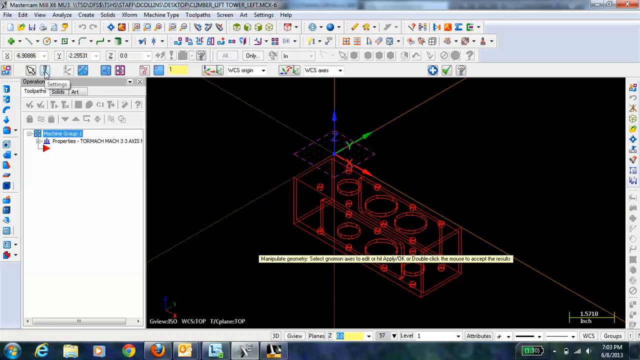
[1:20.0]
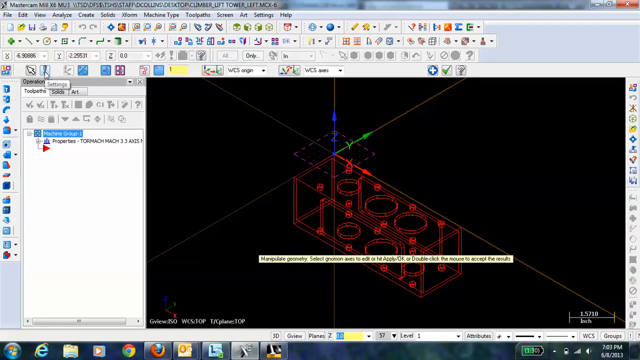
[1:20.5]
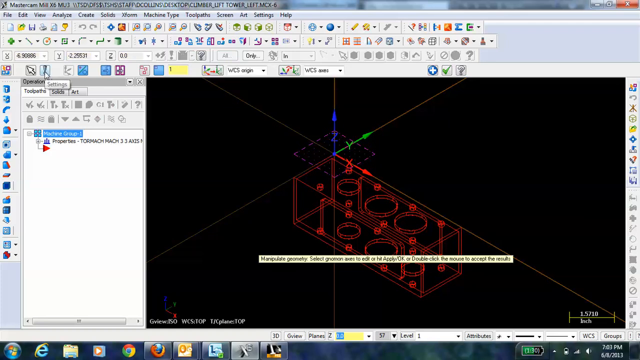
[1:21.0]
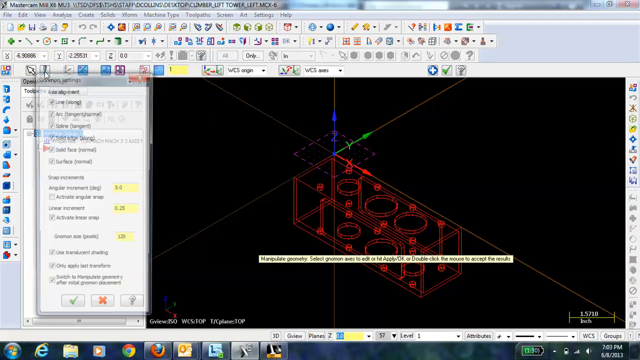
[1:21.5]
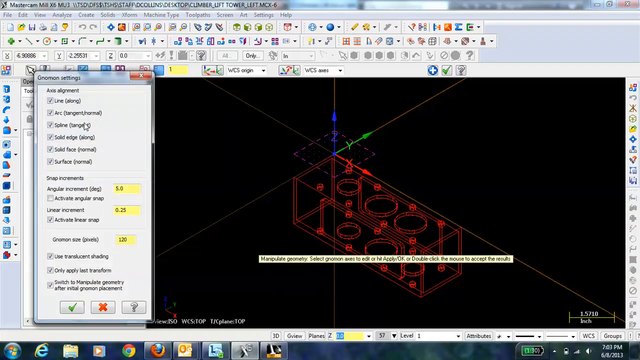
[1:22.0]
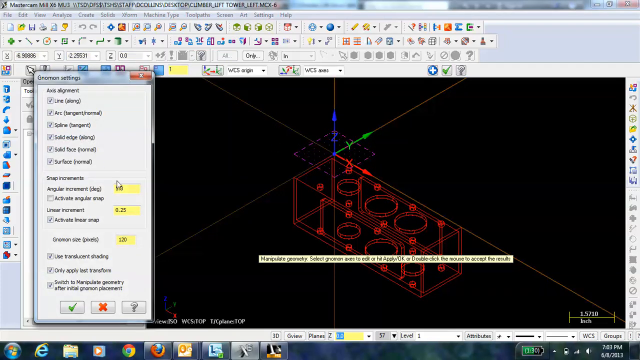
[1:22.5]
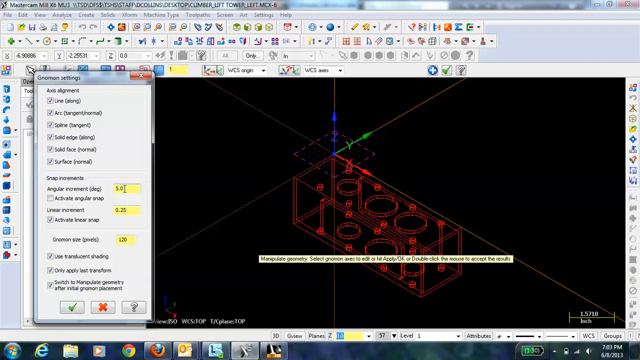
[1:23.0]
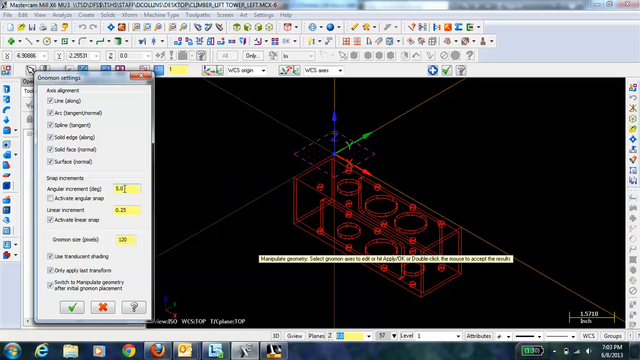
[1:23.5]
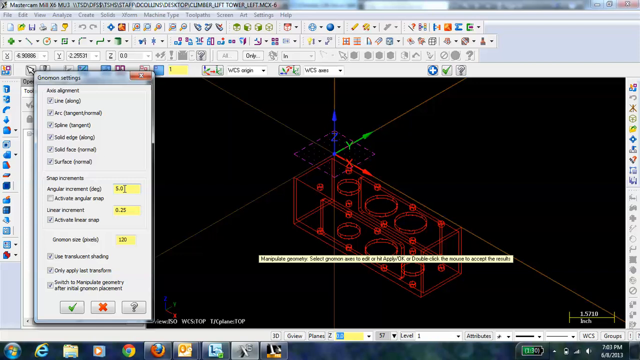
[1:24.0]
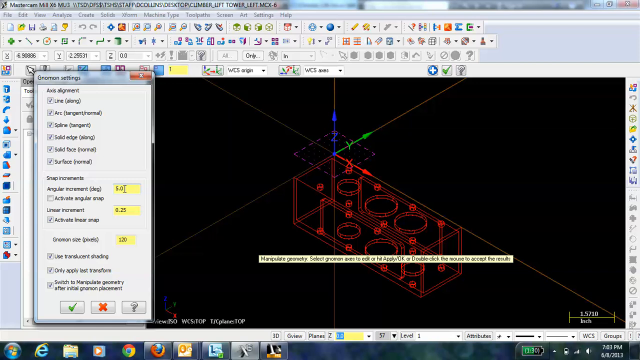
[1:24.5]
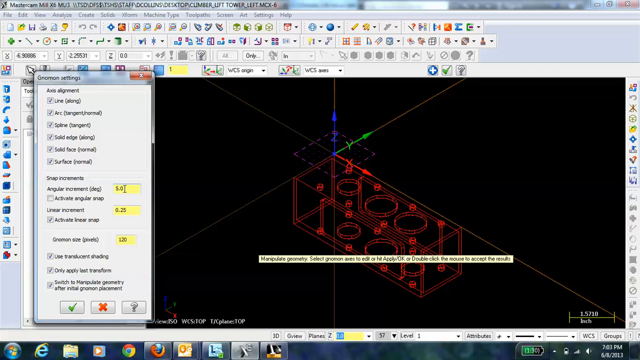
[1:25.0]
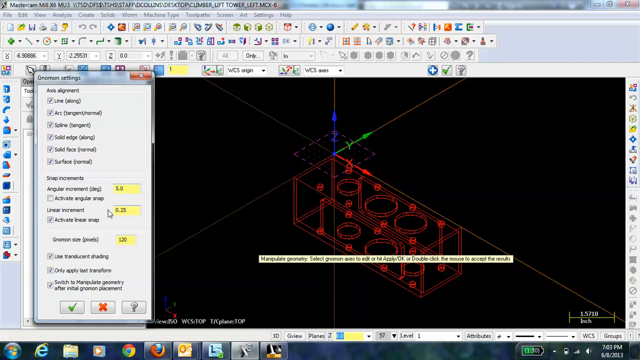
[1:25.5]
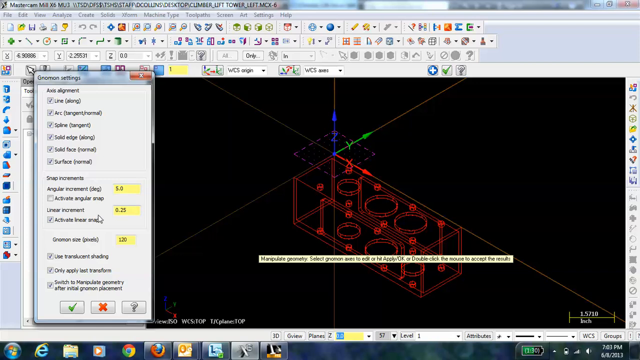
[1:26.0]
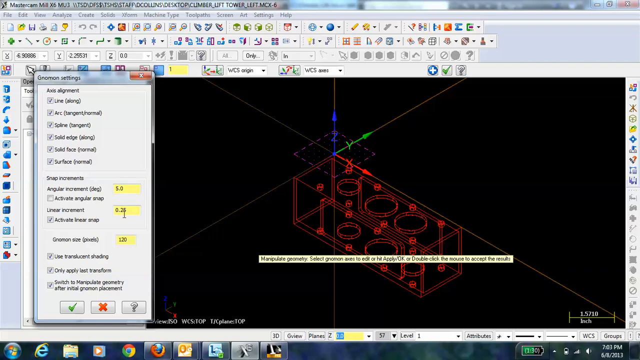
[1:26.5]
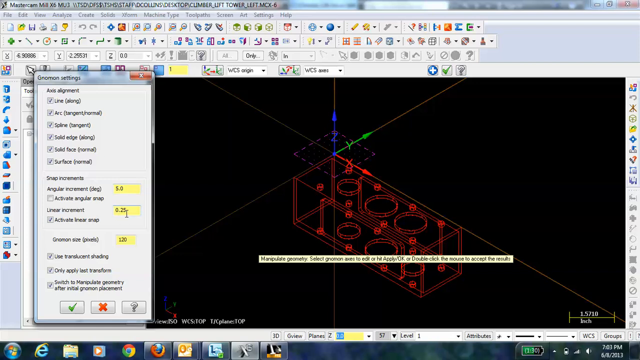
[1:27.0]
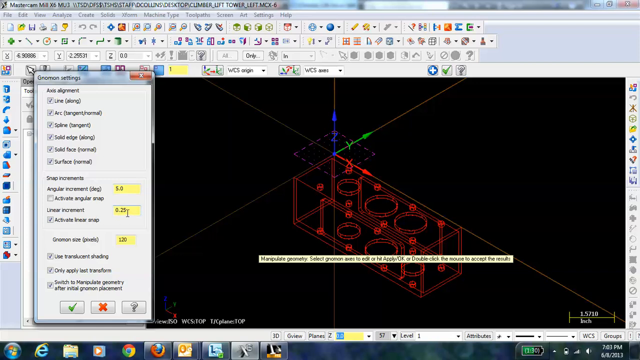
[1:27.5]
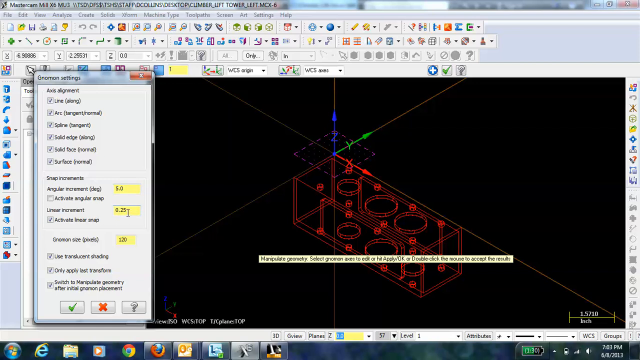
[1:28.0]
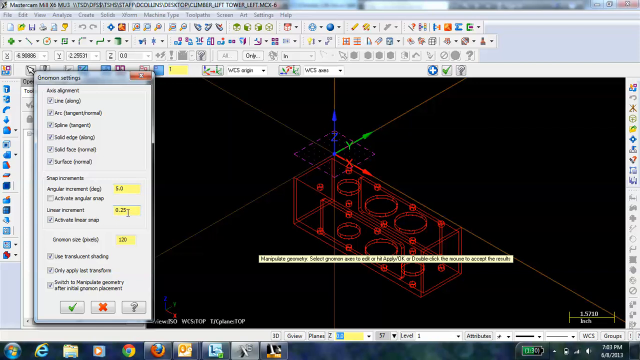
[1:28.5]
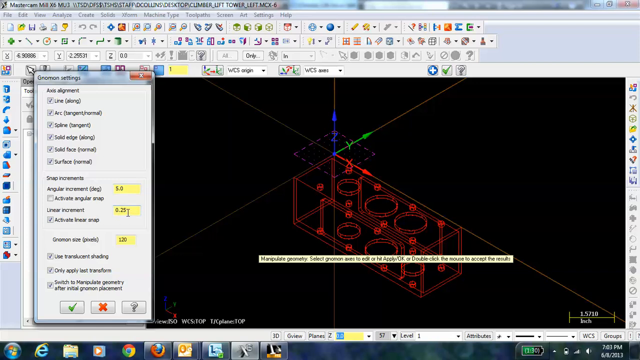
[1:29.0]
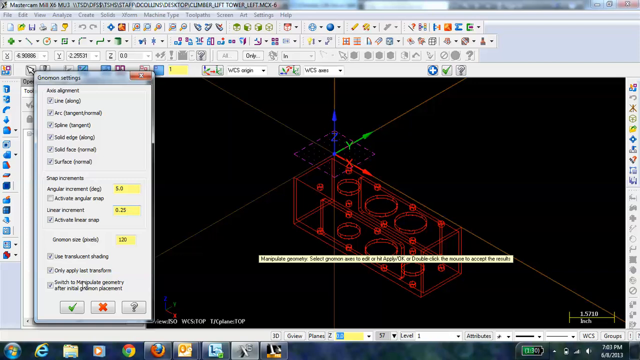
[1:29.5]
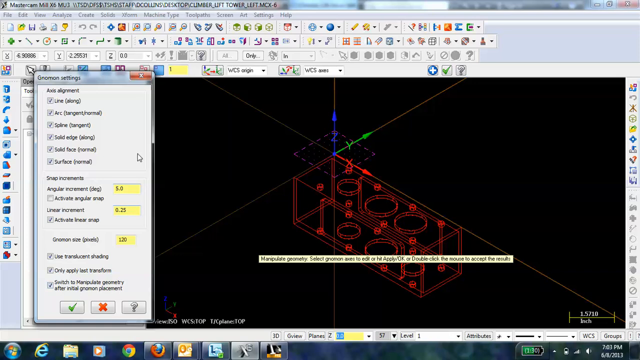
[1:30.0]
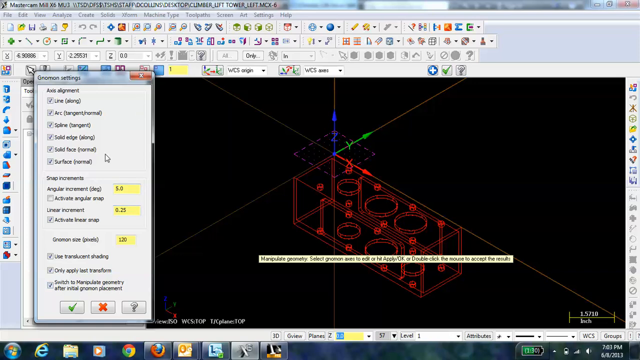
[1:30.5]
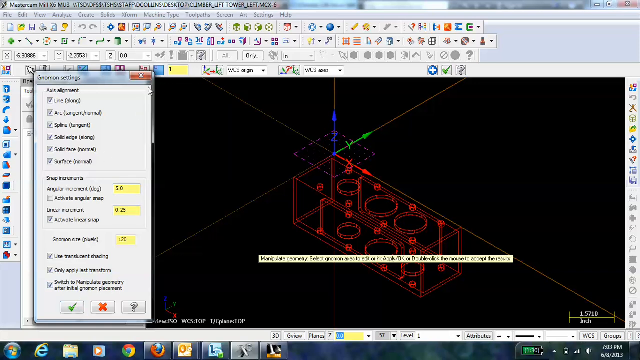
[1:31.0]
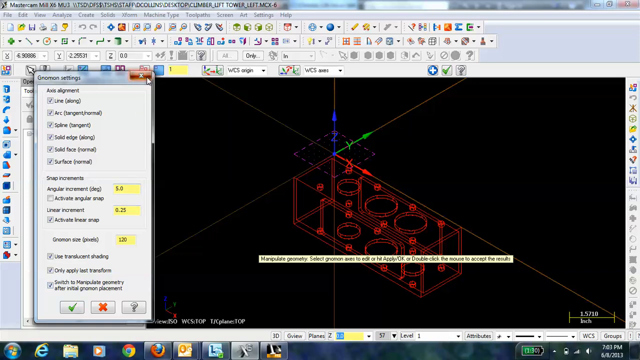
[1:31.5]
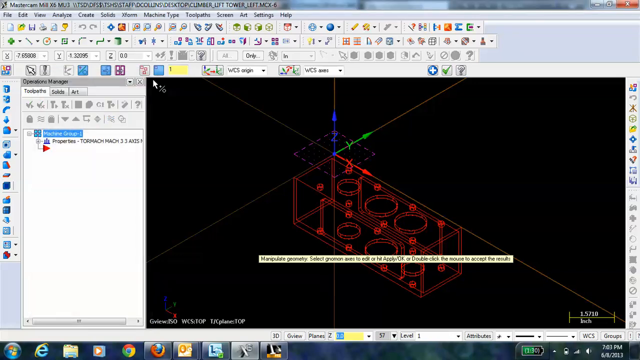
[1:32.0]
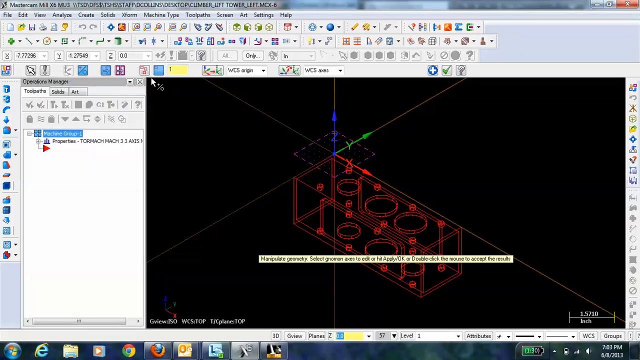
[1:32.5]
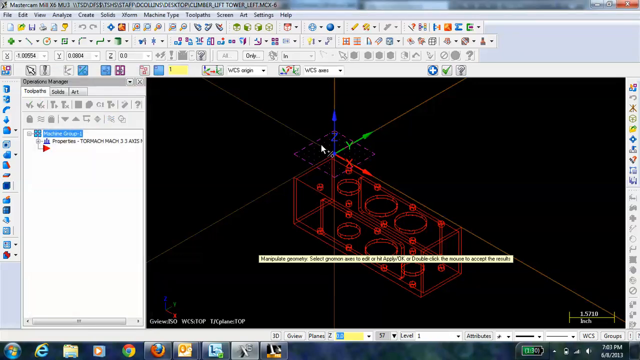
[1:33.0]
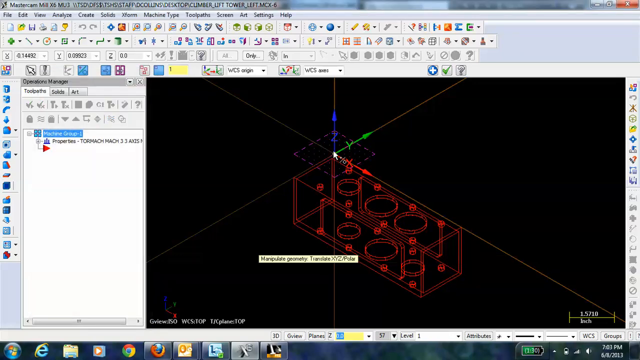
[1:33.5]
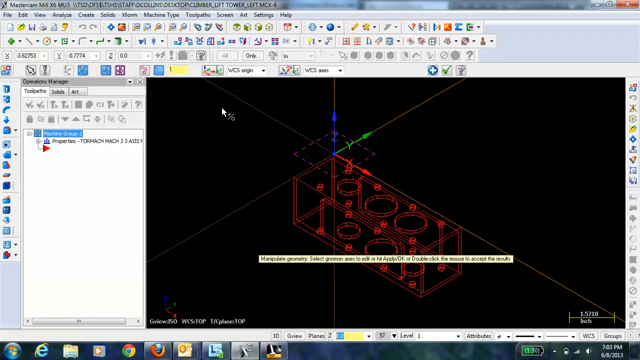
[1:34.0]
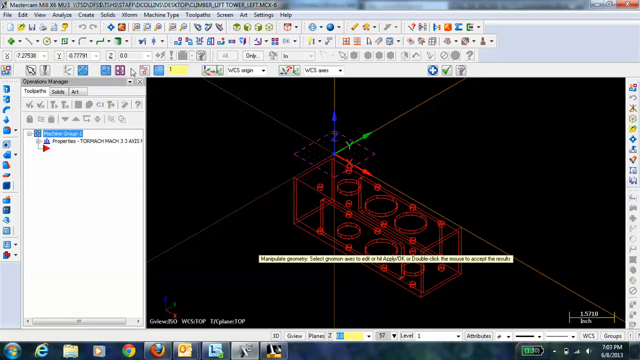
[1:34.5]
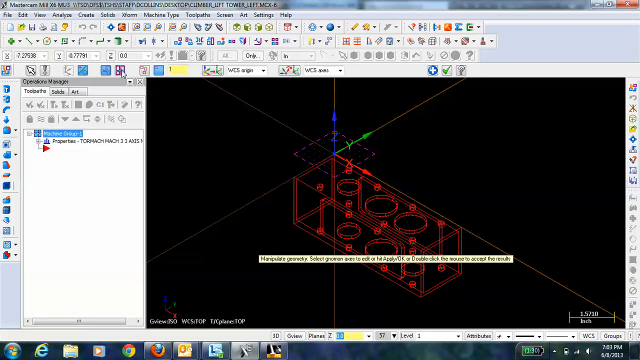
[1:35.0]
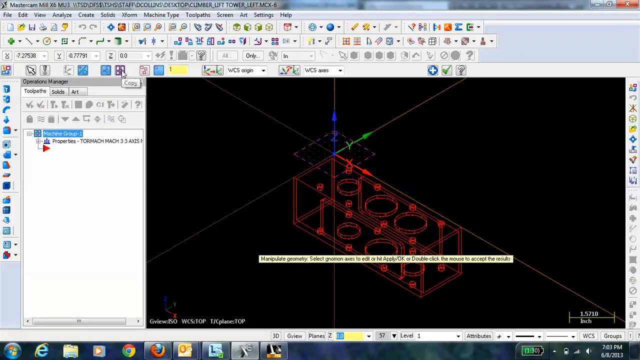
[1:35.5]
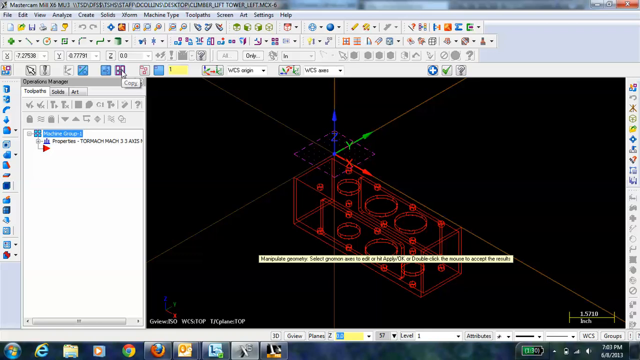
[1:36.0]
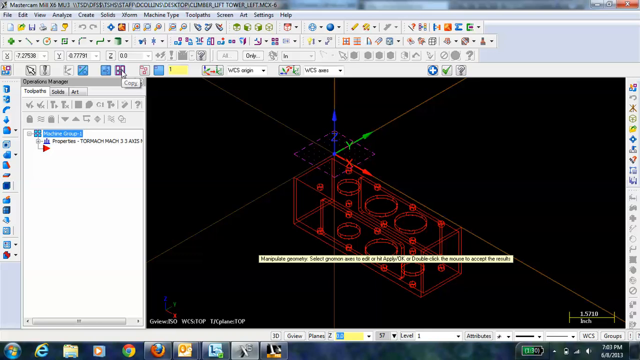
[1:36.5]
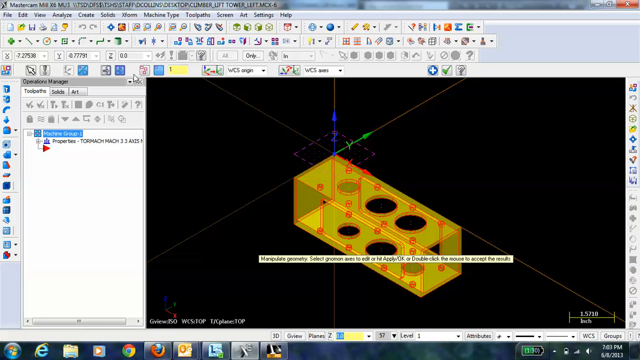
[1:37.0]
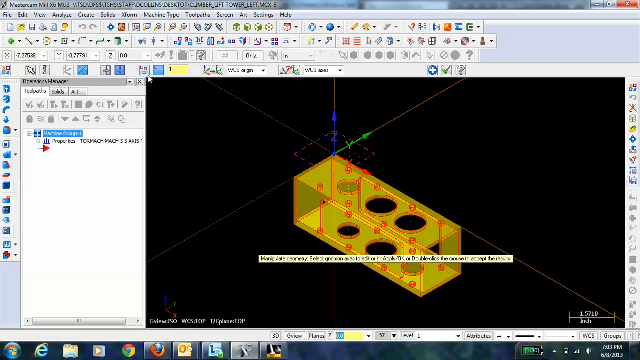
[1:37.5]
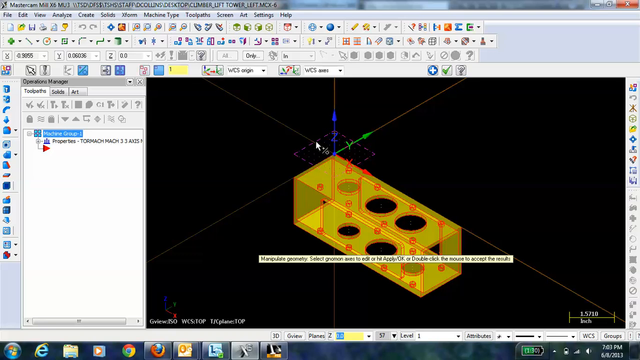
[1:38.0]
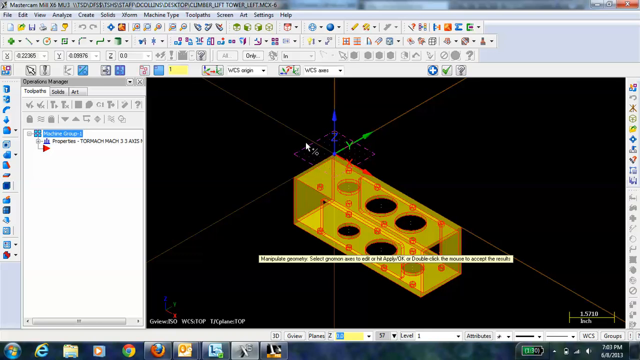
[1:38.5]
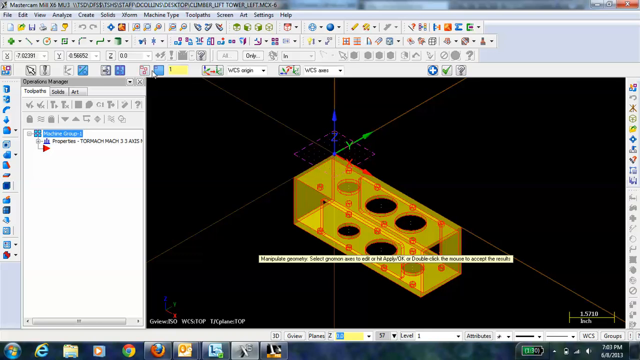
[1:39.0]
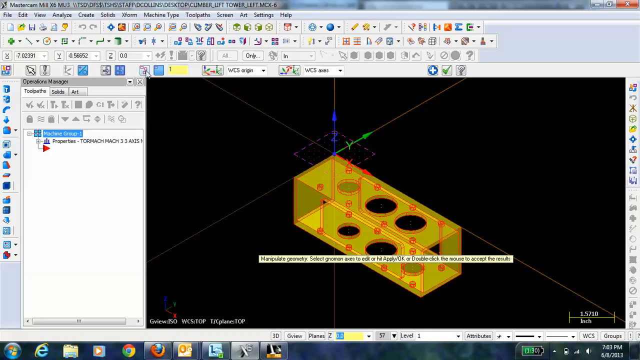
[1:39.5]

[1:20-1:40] The rectangular box is red again, like a wireframe red color, with its corner at the anchor point in the middle of the x, y, and z axes. He opens a menu called gnomon settings, which has check boxes for axis alignment: "line (along)," "arc (tangent/normal)," "spline (tangent)," "solid edge (along)," "solid face (normal)," and "surface (normal)." Underneath is "Snap Increments," with angular increments and linear increments, then another for gnomon size, and more check boxes that say "use translucent shading," "only apply last transform," and "switch to manipulate geometry after initial gnomon placement." There are a check, an X, and a question mark button. The cursor goes down to the linear increment, currently 0.25, and hovers over it; he presses the checkmark and picks the middle anchor point at the X, Y, and Z axis, which makes the box translucent yellow again. The cursor goes up to an option underneath the Z-axis control on the menu that shows the exact position on the Z-axis, then moves back to an option that has three red boxes underneath the Z-axis.